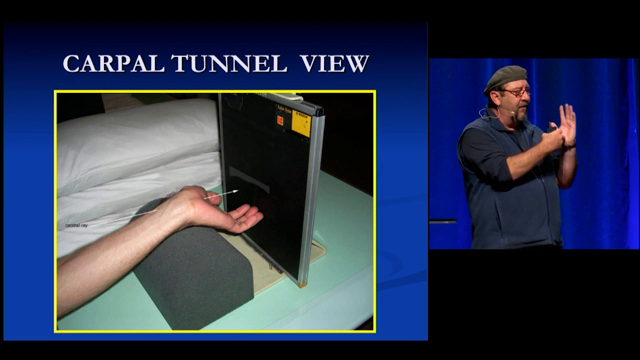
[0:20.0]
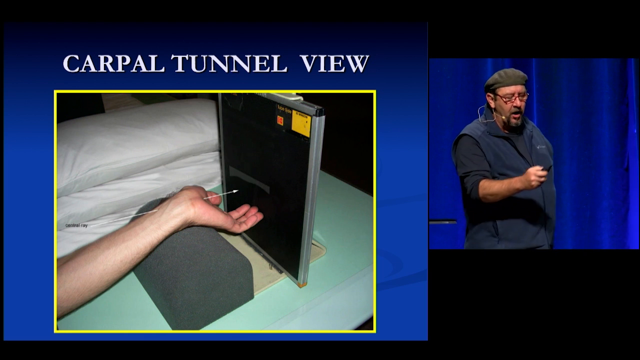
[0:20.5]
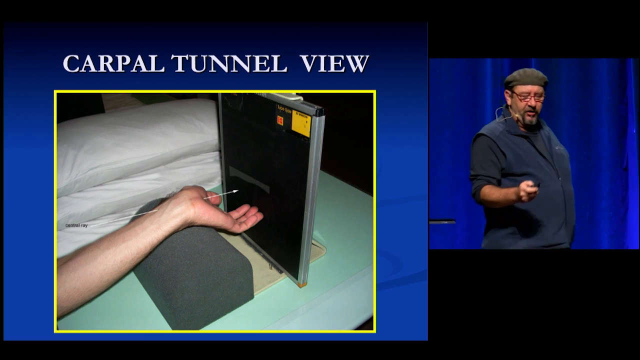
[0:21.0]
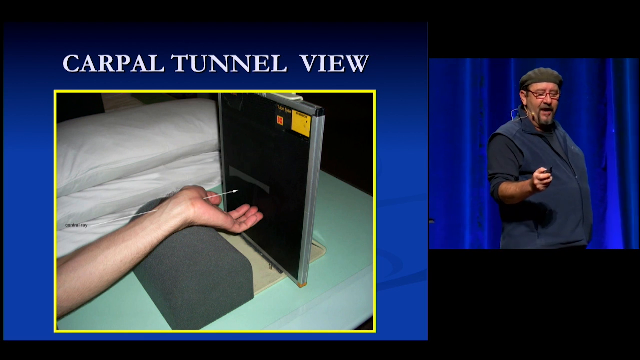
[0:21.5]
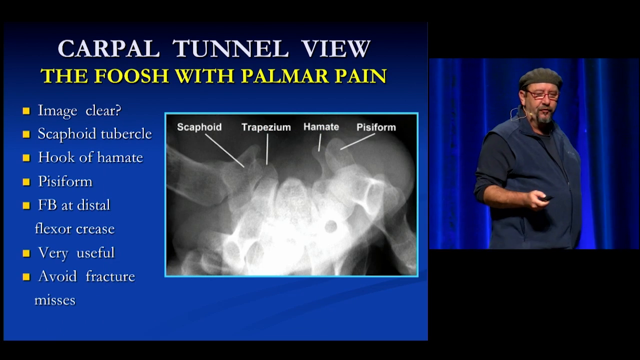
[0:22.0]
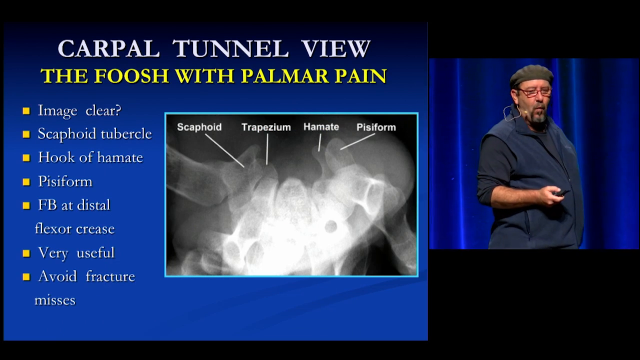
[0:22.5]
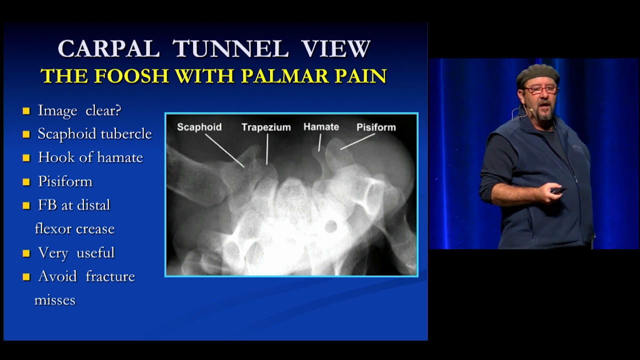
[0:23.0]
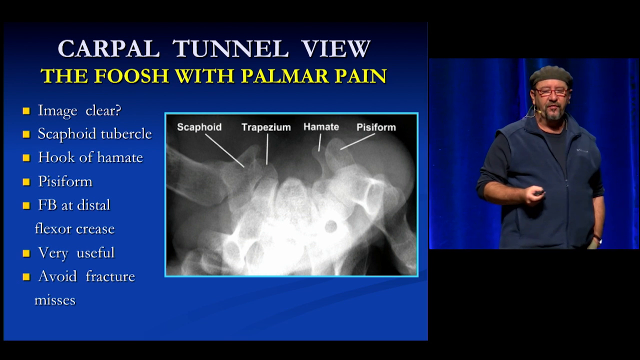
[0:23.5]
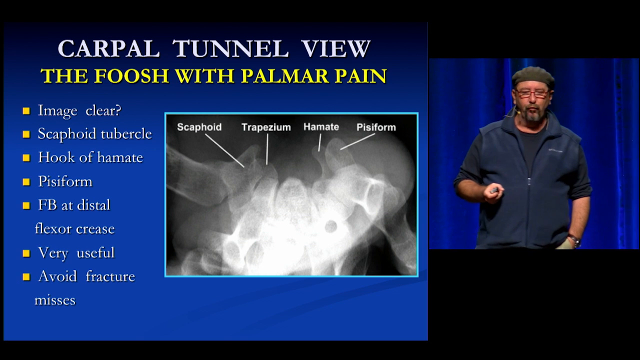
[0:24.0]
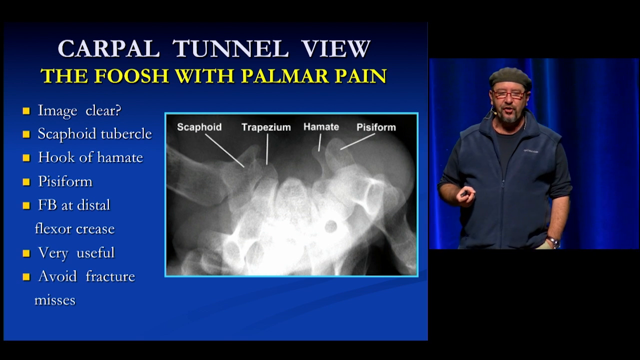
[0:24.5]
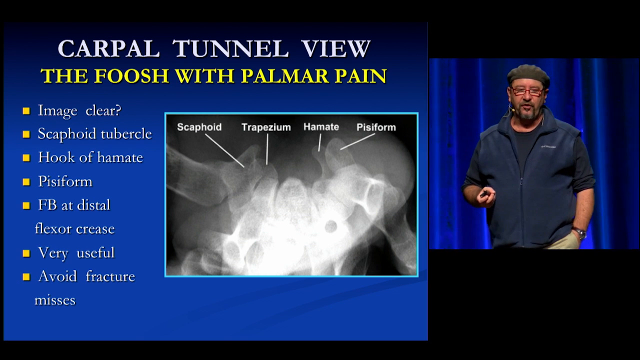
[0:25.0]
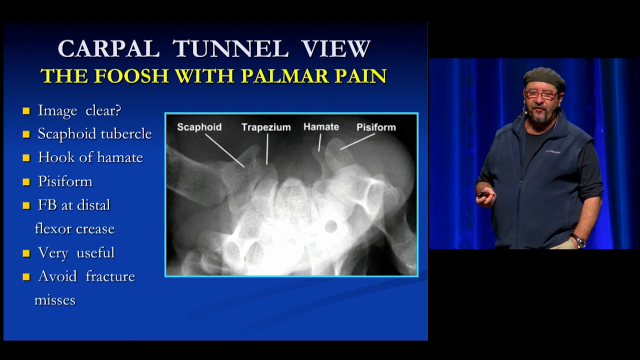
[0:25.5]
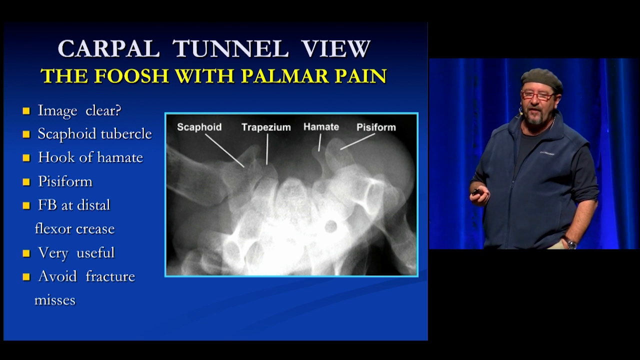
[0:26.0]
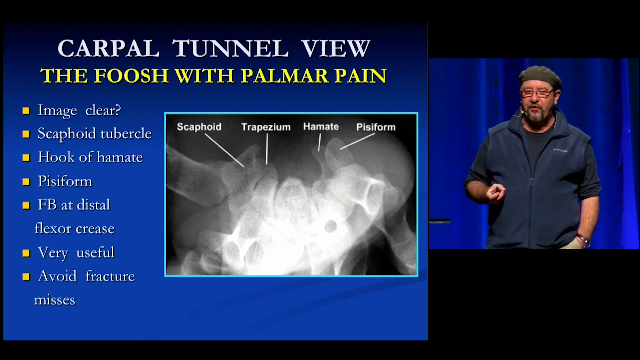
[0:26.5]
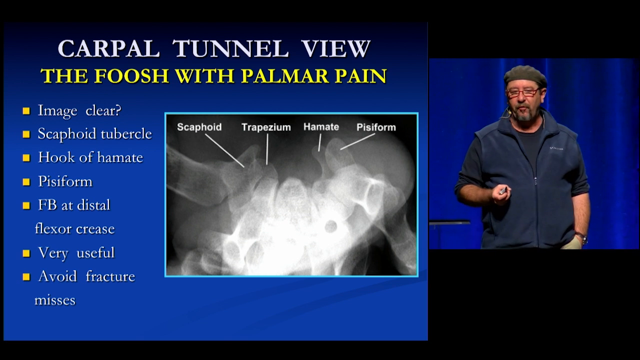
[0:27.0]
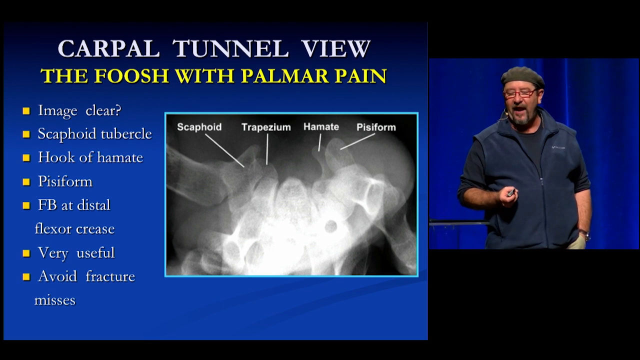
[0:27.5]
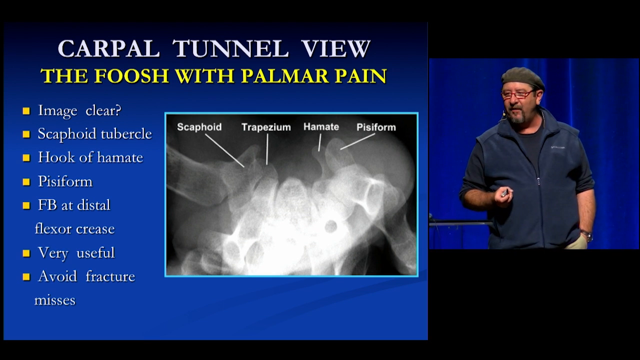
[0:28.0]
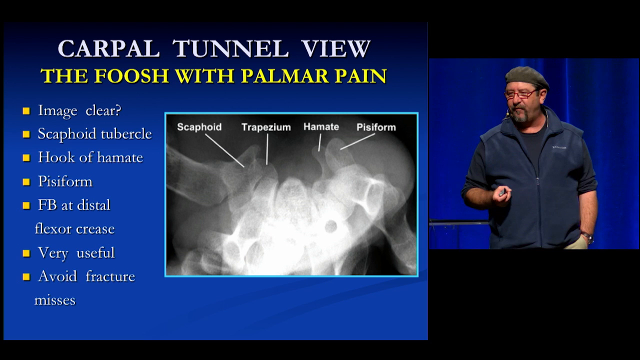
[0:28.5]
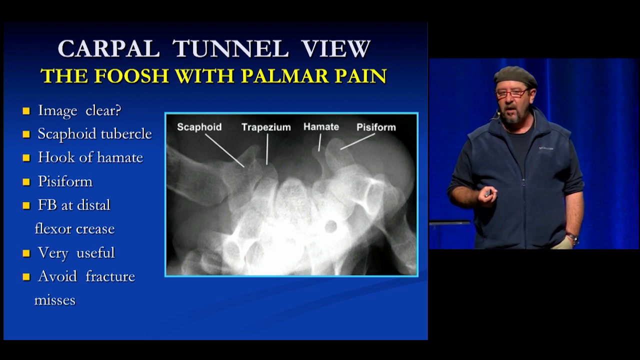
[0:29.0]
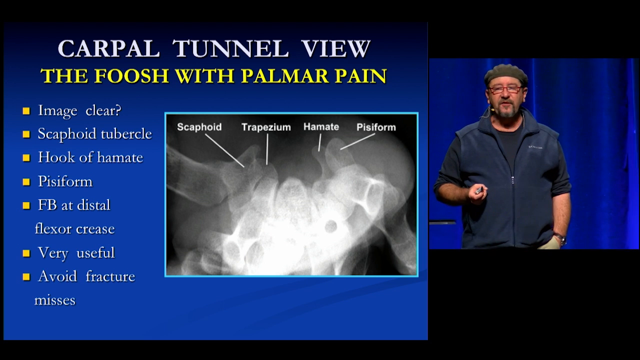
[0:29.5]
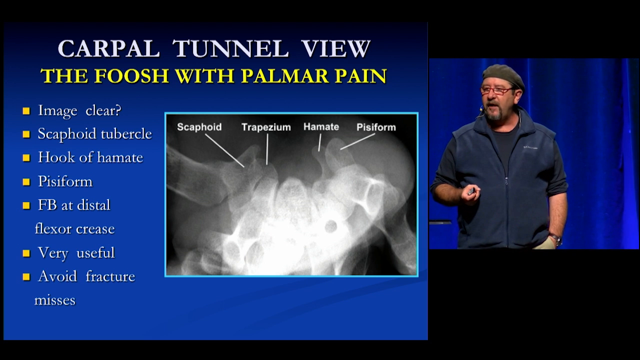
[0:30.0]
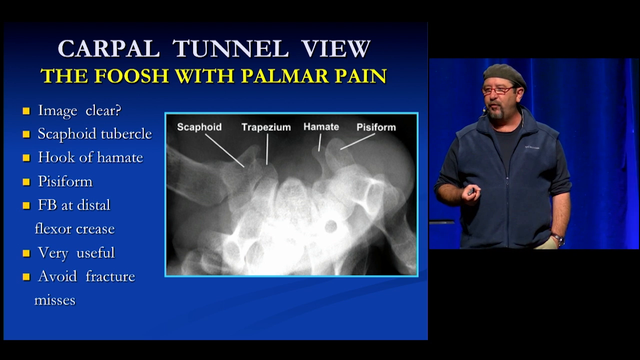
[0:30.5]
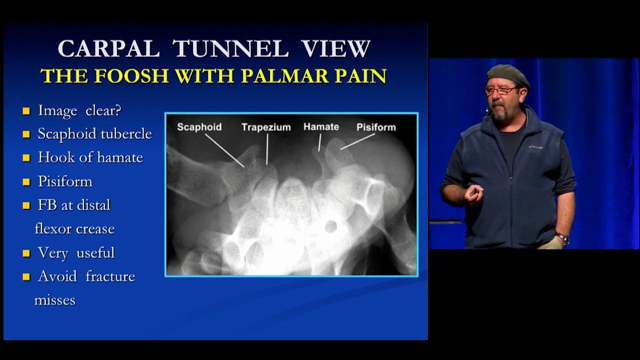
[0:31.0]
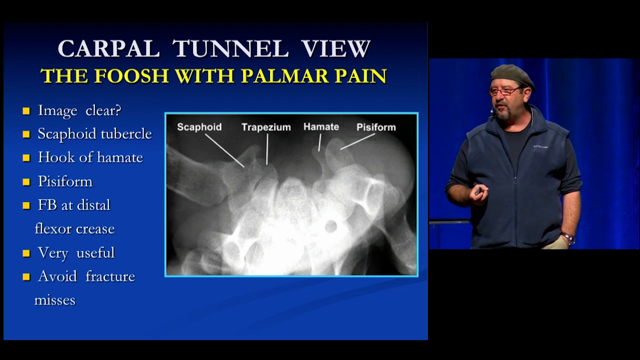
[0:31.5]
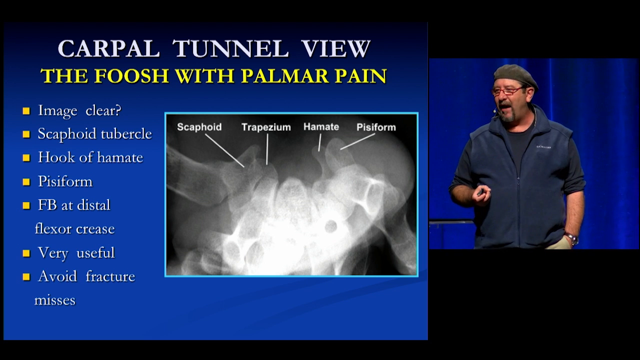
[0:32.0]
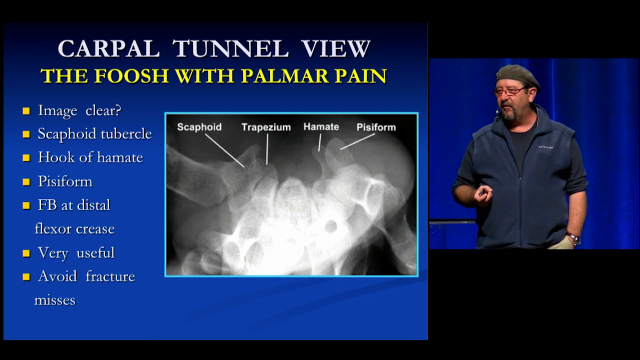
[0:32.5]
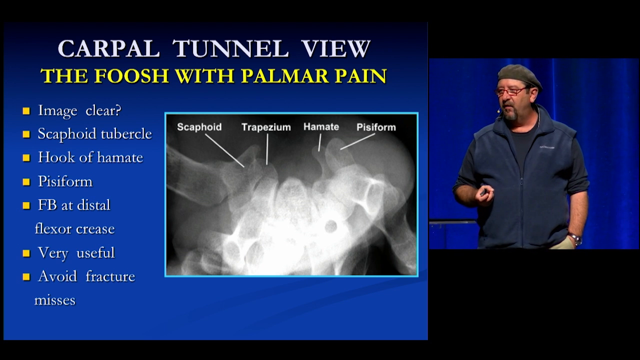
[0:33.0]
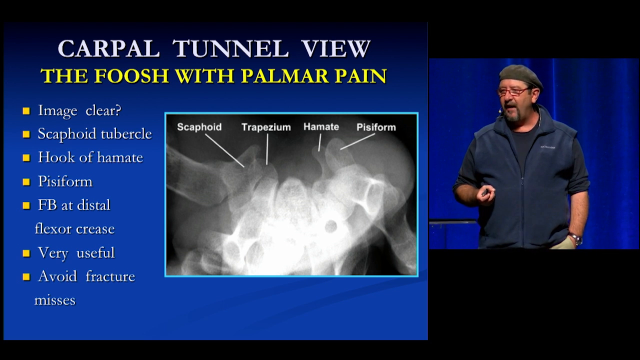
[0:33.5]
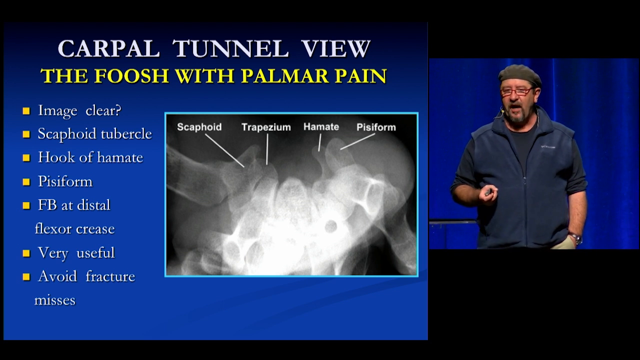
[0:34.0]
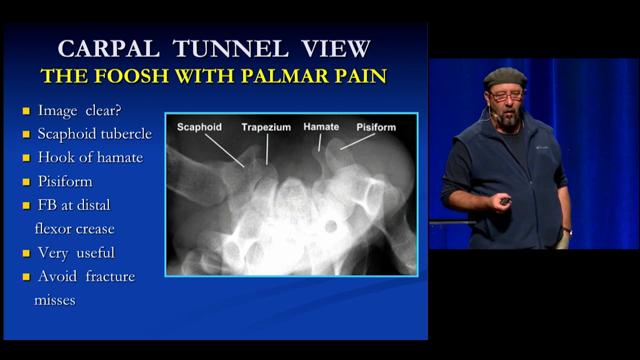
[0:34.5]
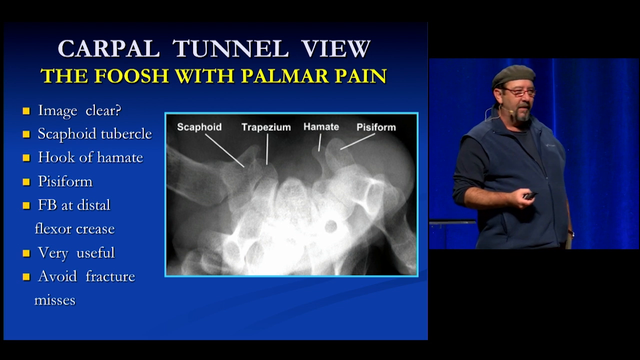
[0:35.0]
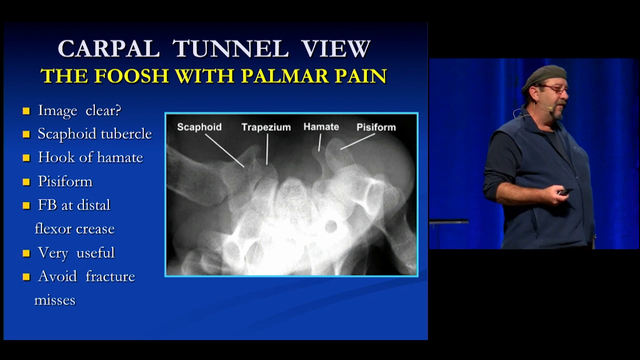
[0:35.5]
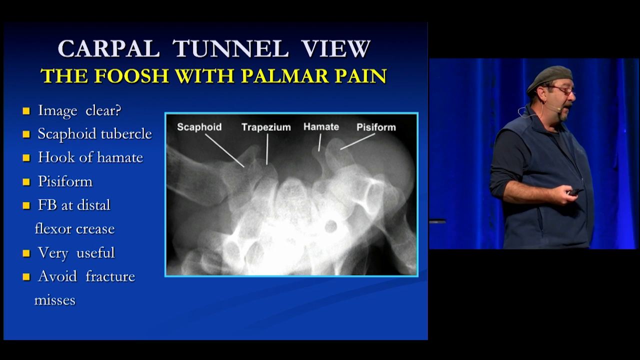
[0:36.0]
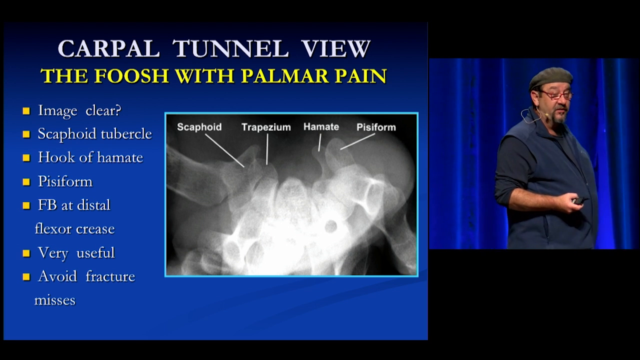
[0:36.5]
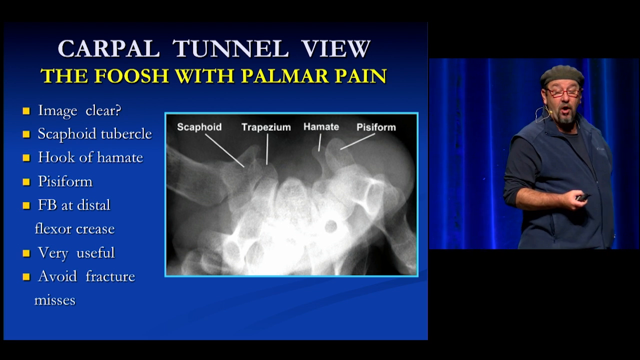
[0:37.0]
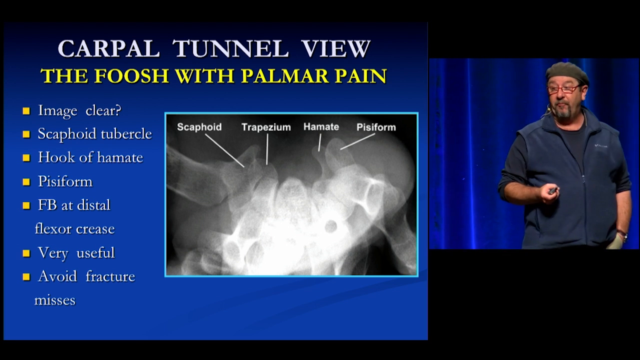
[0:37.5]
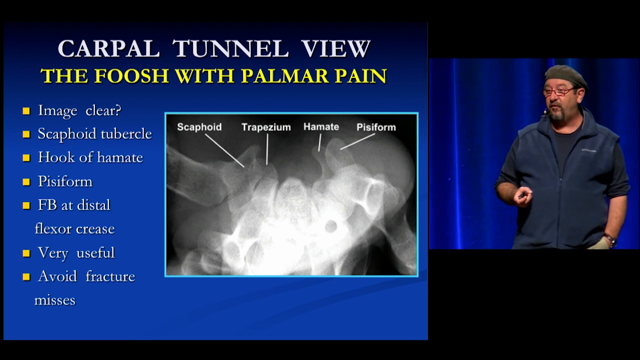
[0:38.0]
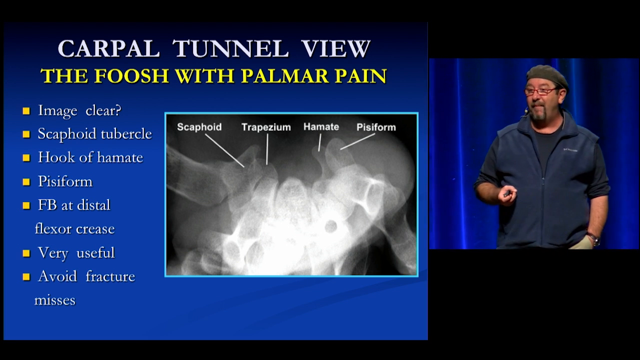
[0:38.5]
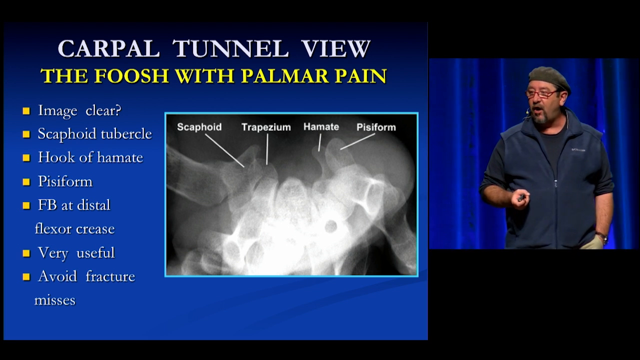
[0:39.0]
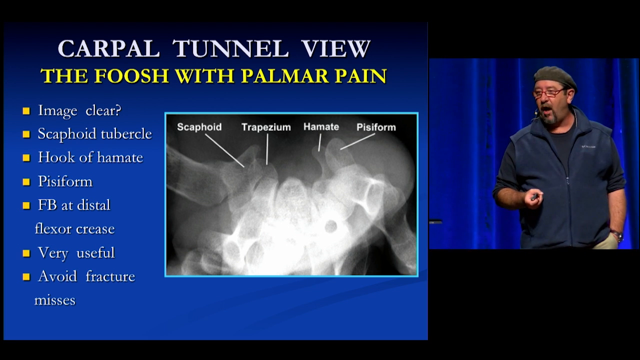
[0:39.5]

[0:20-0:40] The man walks around the stage holding a remote to change the slide. The slide changes to one reading "carpal tunnel view", with yellow text reading "the Foosh with palmar pain" (Foosh spelled F-O-O-S-H). It shows an x-ray of a hand with the labels scaphoid, trapezium, hamate and pisiform, and bullet points to the left of the x-ray read "image clear, scaphoid, tubercle, hook of hamate, pisiform, FB at distal flexor crease, very useful and avoid fracture misses". In the video insert, the man paces back and forth on the stage, talking to the crowd and acknowledging them, with one hand holding a remote control. The stage has blue curtains, and the background of the slide is also blue.